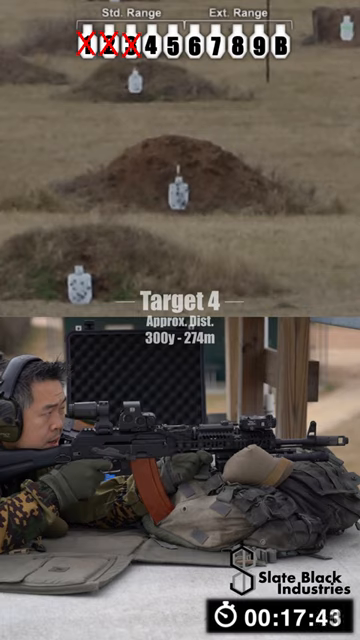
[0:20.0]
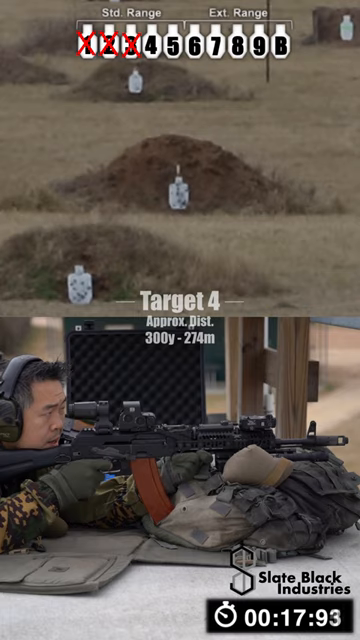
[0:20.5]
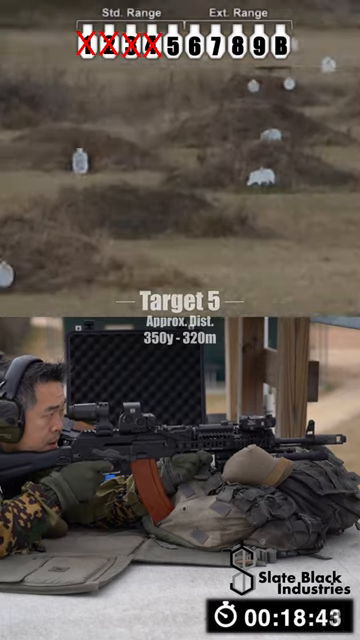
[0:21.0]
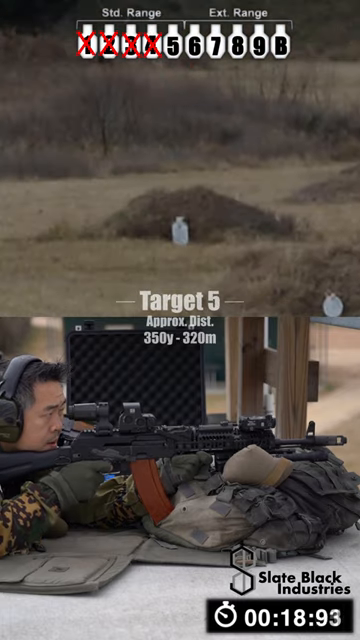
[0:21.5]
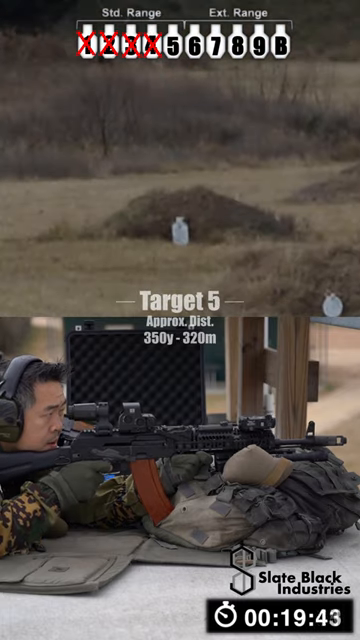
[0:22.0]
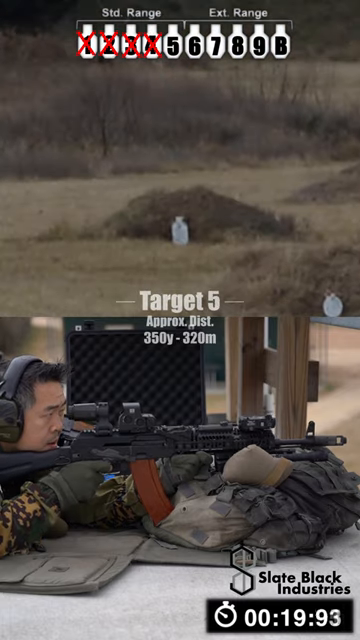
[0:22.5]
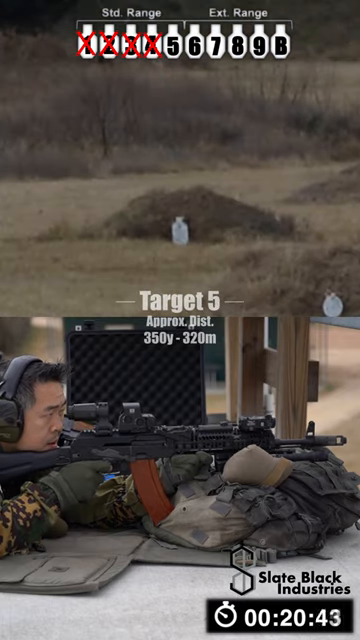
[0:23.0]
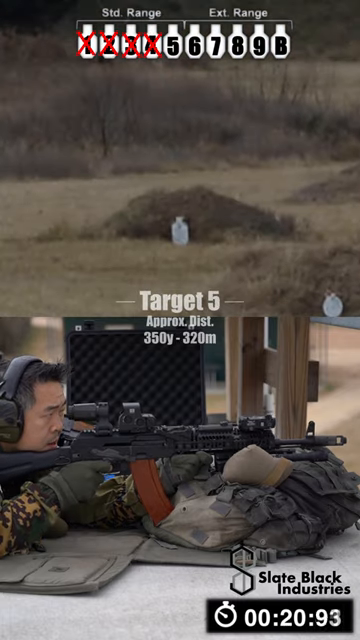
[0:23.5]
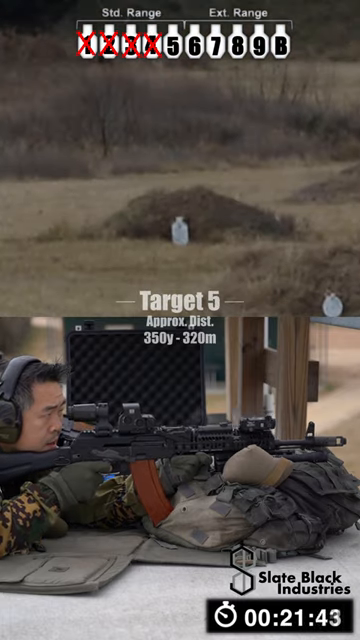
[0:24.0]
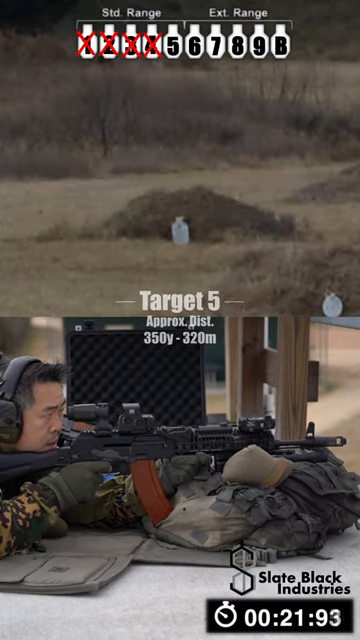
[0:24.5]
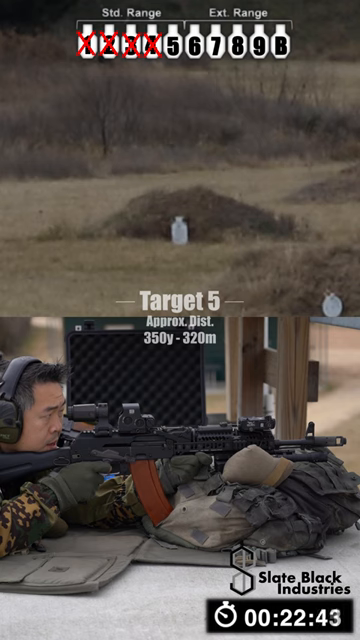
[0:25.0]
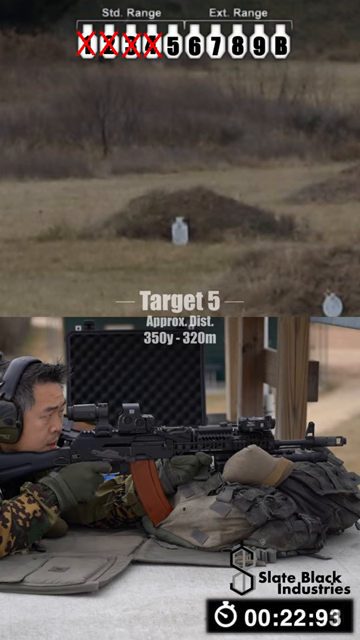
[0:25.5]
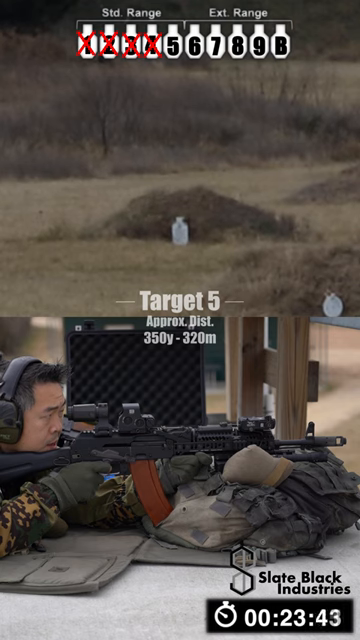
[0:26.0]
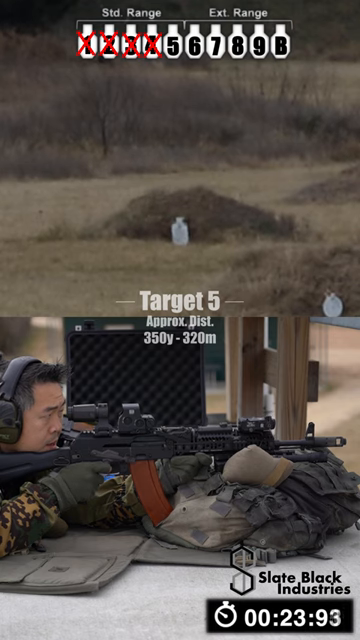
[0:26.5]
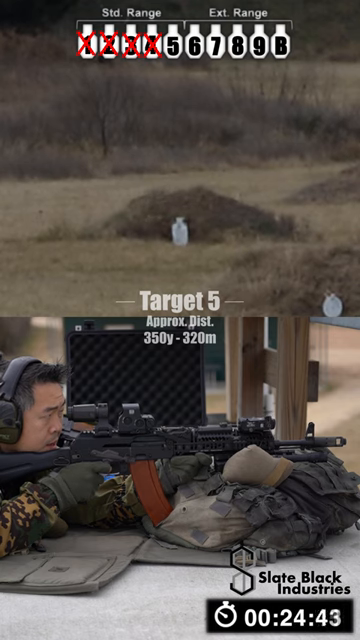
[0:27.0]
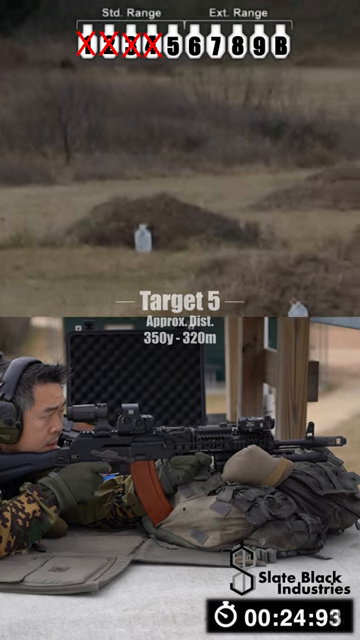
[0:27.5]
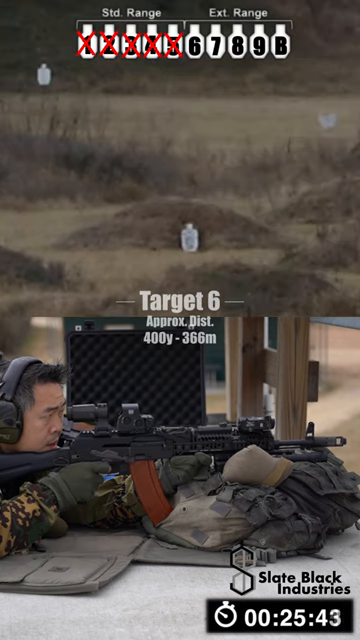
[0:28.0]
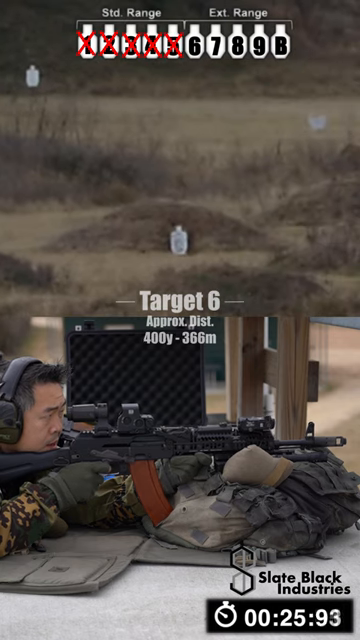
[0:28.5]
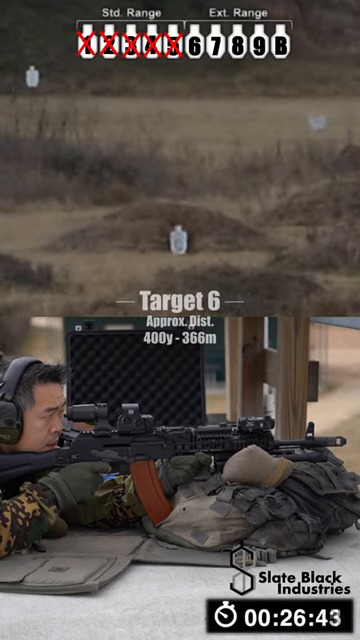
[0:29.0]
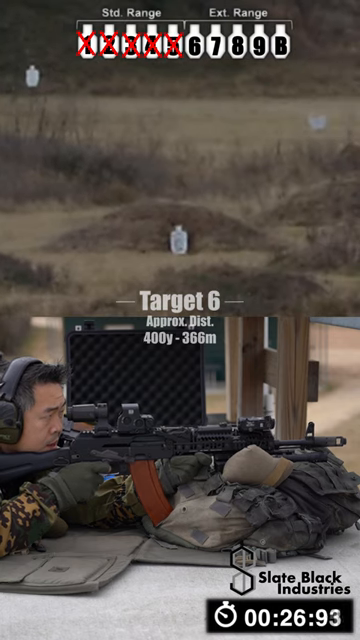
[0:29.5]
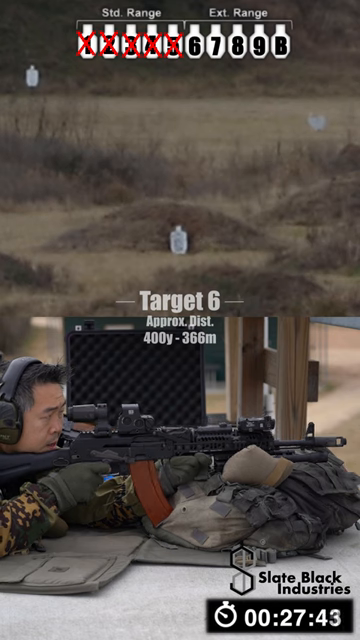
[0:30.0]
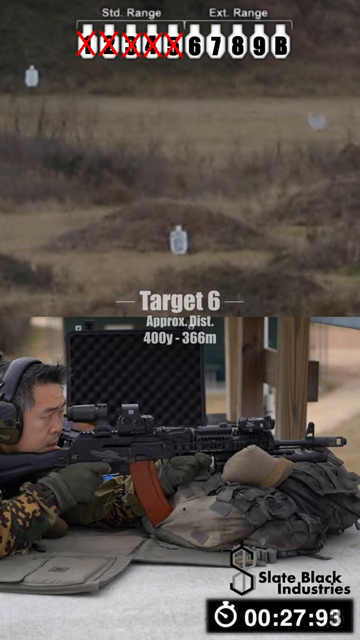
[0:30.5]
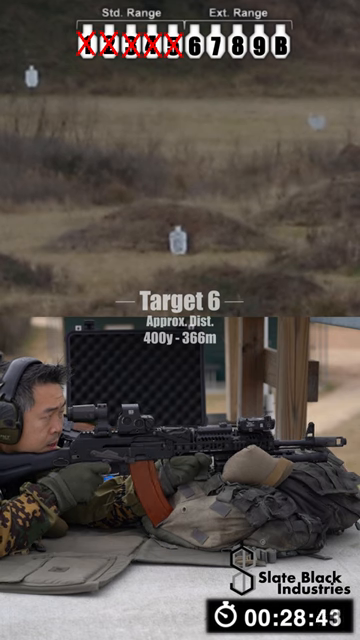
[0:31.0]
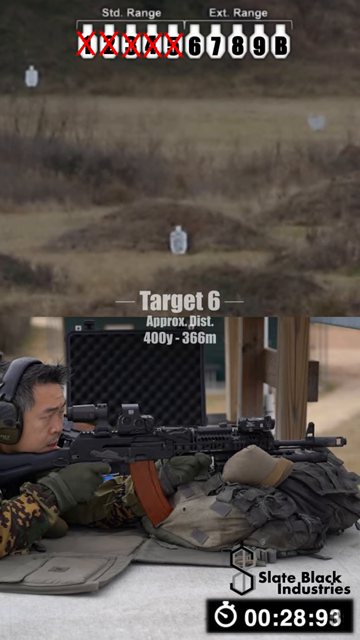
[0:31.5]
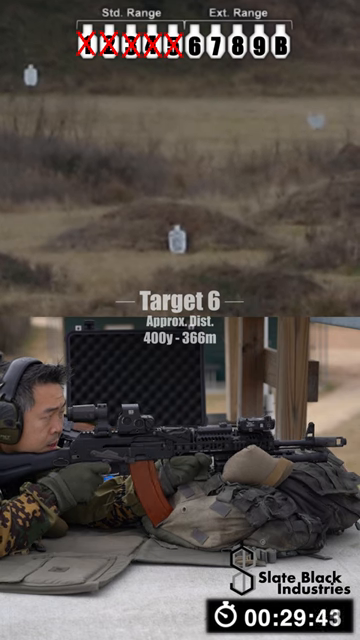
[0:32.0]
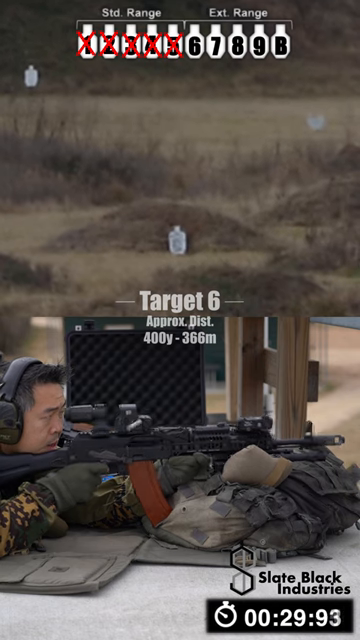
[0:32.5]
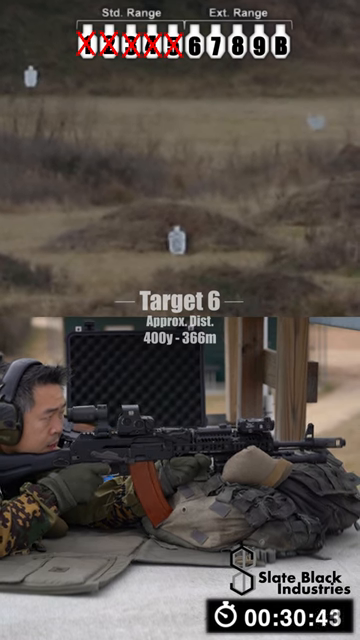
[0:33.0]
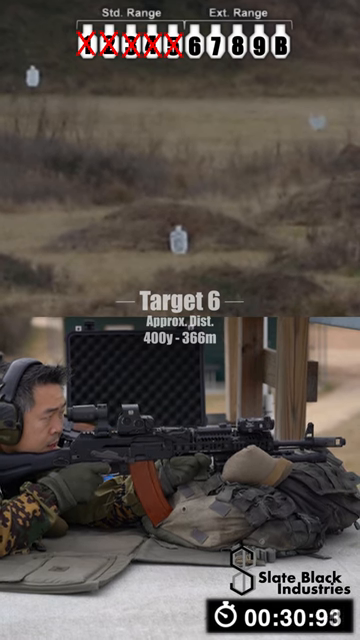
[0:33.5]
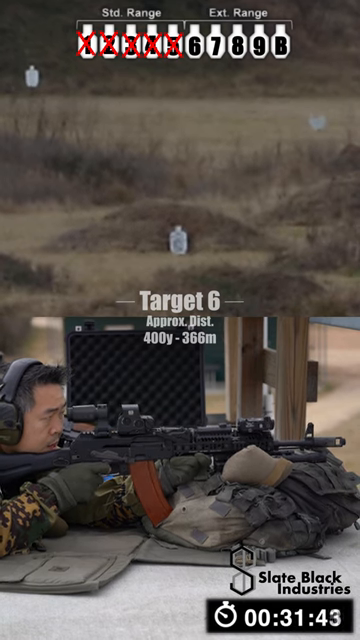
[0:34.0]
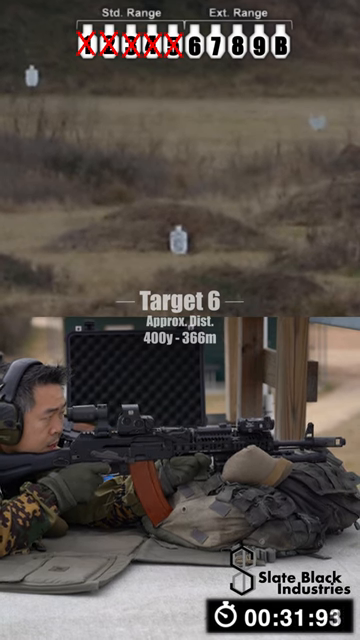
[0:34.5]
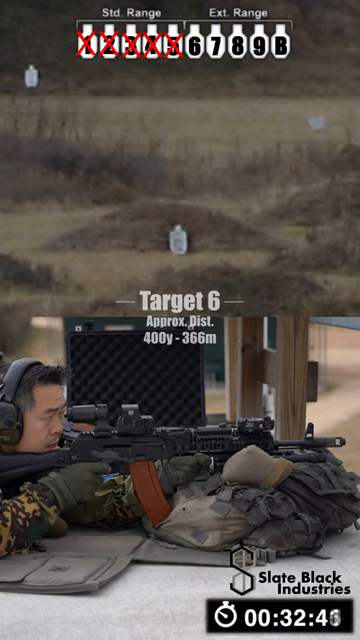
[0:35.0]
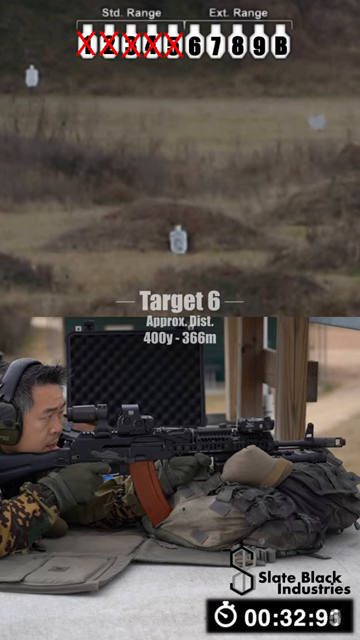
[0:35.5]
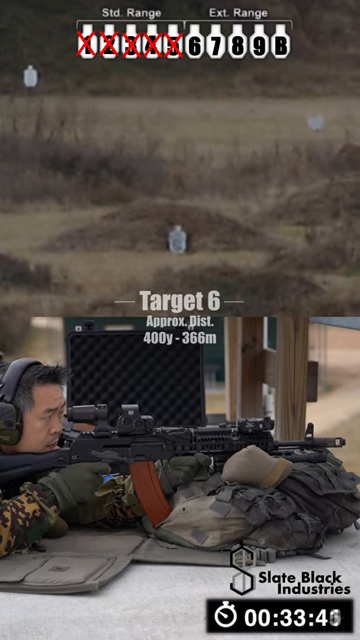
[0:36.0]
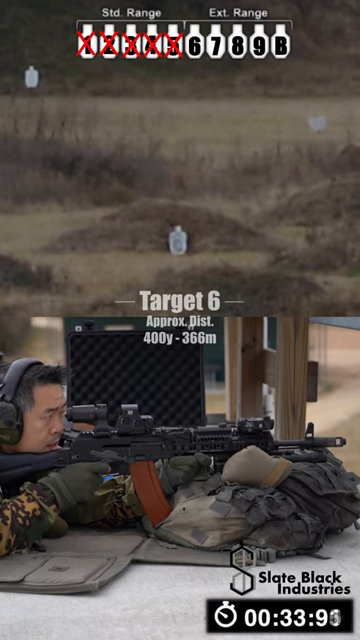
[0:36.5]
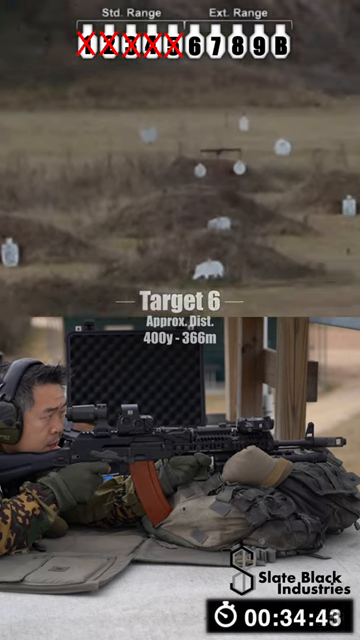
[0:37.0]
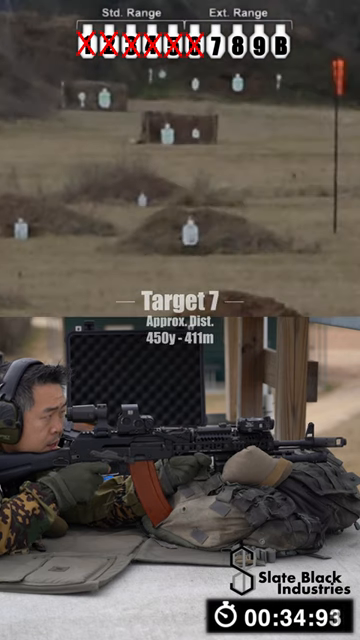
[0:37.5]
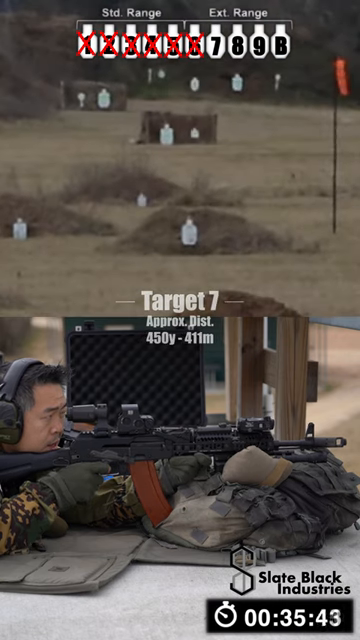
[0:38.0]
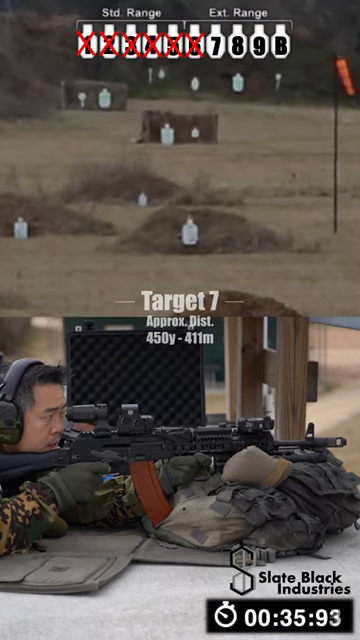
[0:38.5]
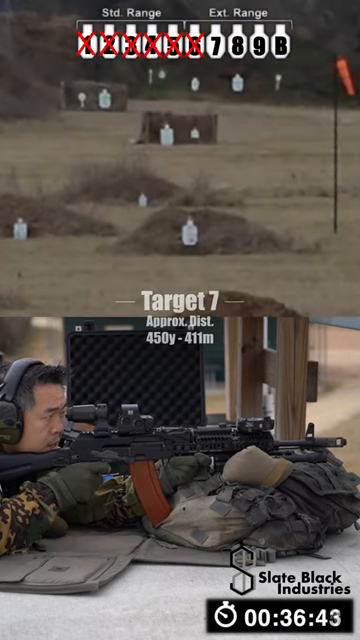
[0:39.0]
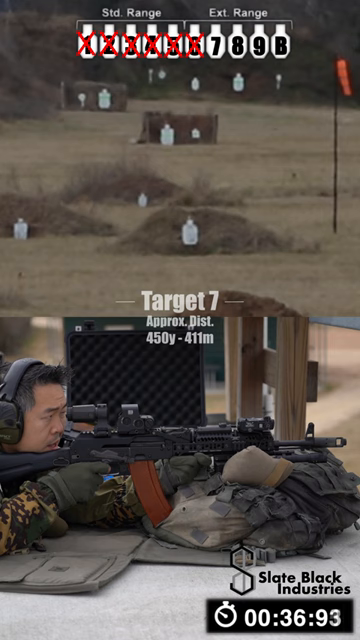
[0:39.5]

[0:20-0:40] The bottom half of the screen shows the name "Slate Black Industries" with a logo that appears to be the letter S, and a timer at the bottom with 17 minutes and 43 seconds left. The man lying down with the gun appears to have it resting on a backpack, like an army backpack; he lies on a pad of some sort and wears green fatigues. In the background are a wood structure and what looks like soundproofing material. In the top half, the camera moves in and shows different targets: targets one, two, three and four each have an X through them, and the camera seems to move from target to target as each one is shot at. The screen reads "target five" and "approximate distance, 350 yards or 320 meters". The gun recoils as the person fires each shot.